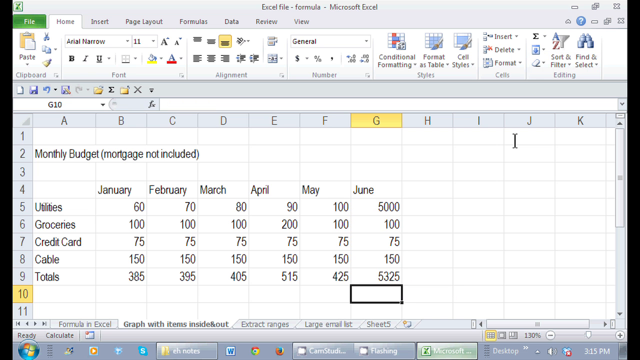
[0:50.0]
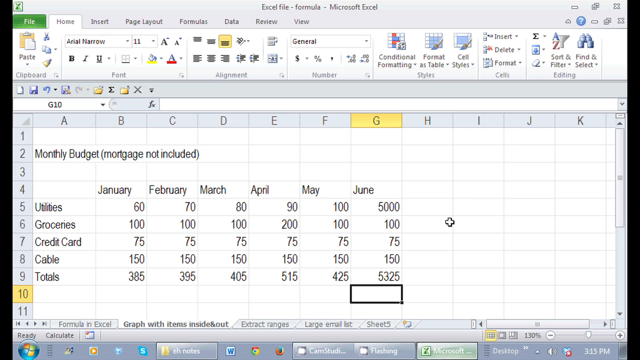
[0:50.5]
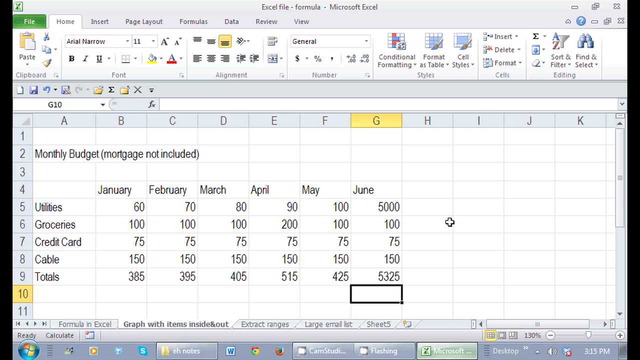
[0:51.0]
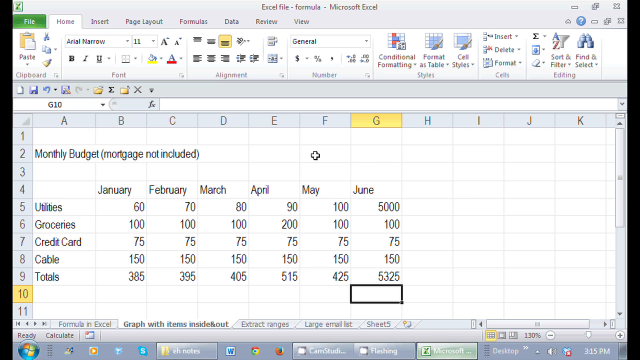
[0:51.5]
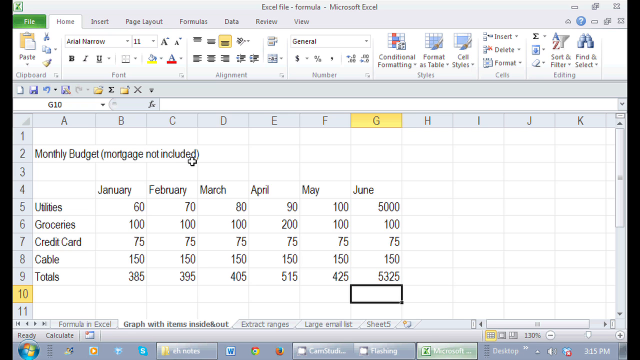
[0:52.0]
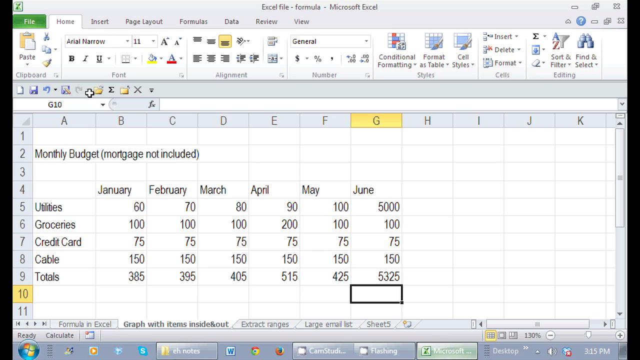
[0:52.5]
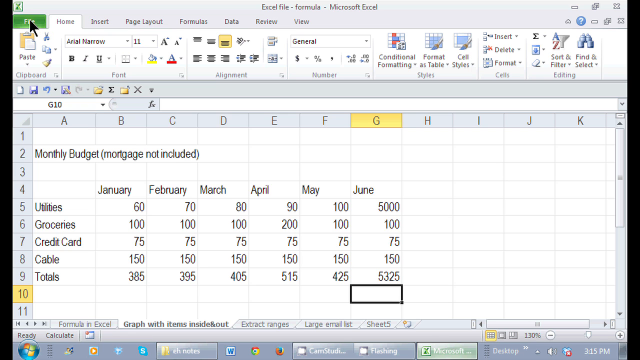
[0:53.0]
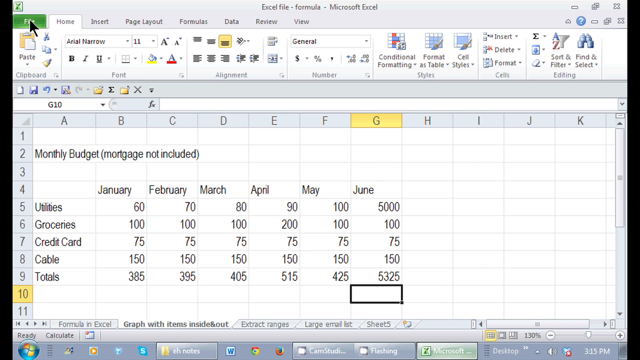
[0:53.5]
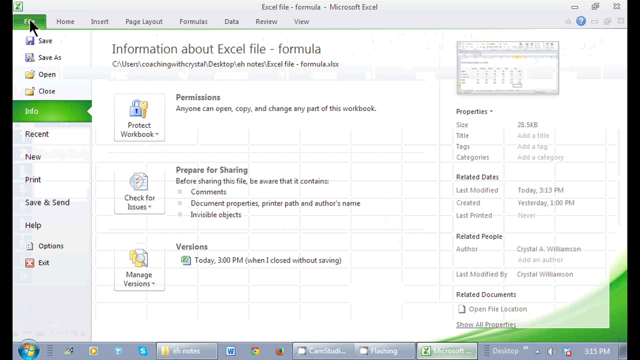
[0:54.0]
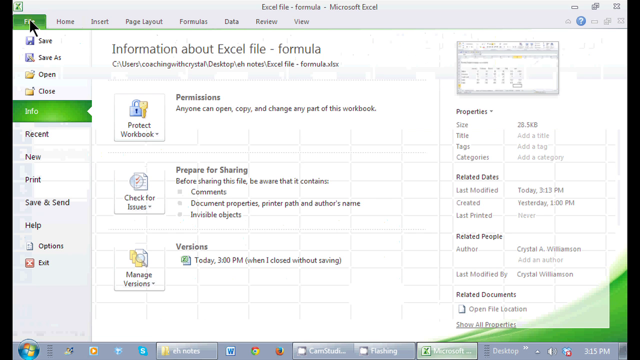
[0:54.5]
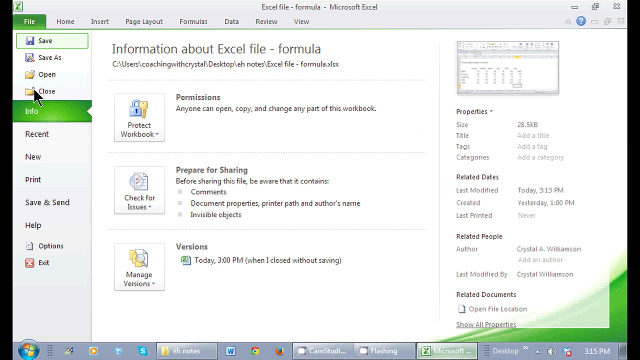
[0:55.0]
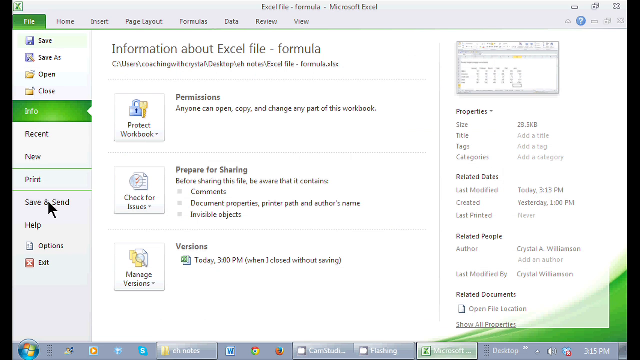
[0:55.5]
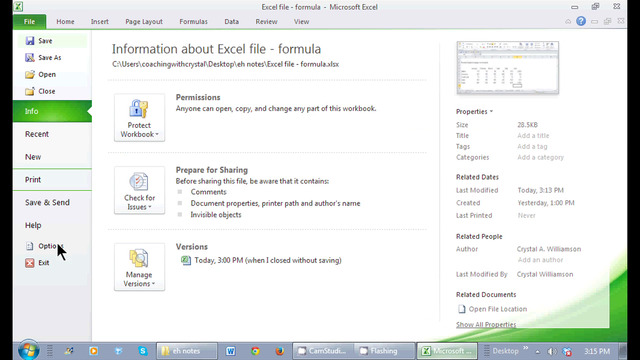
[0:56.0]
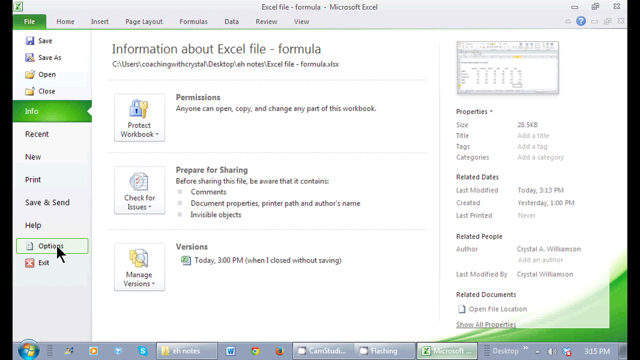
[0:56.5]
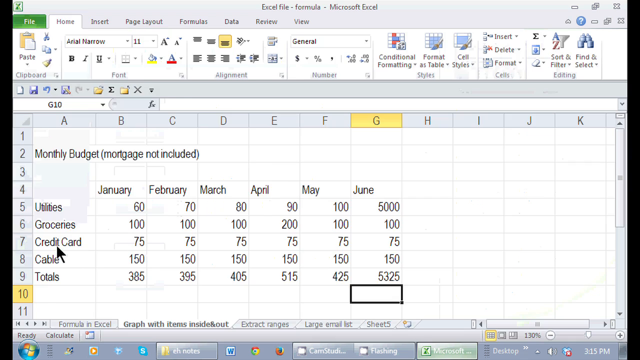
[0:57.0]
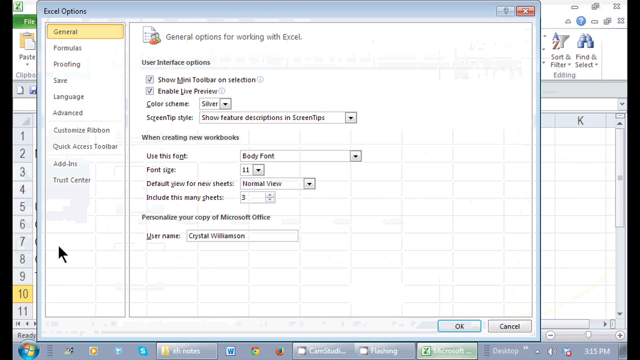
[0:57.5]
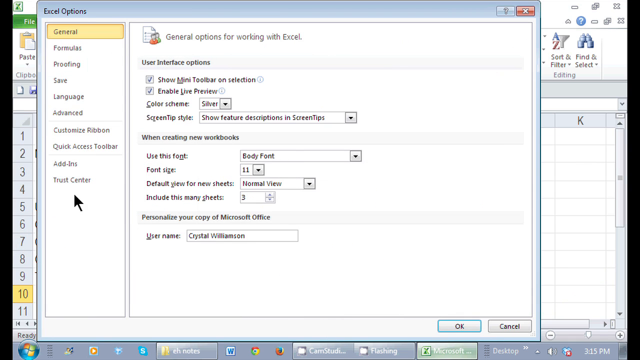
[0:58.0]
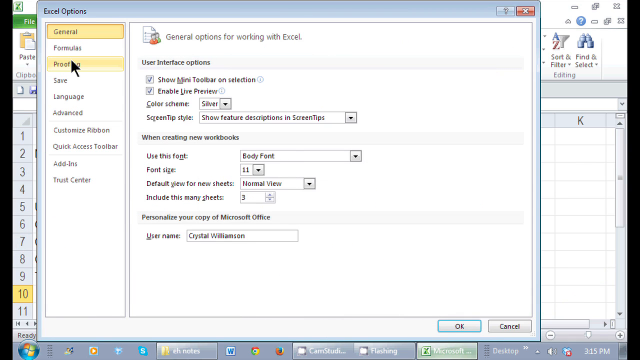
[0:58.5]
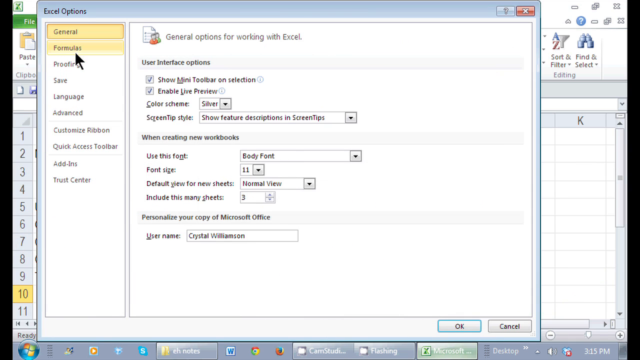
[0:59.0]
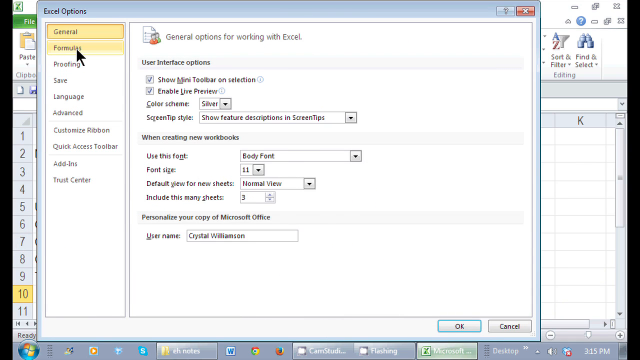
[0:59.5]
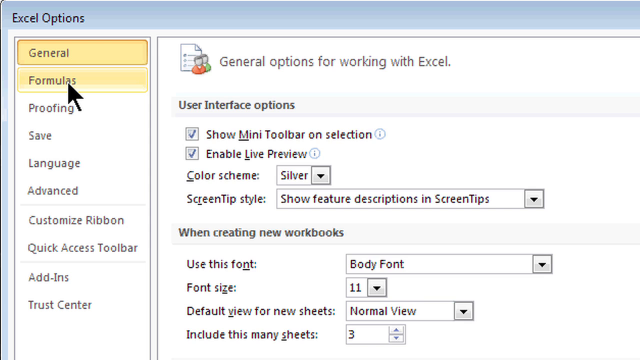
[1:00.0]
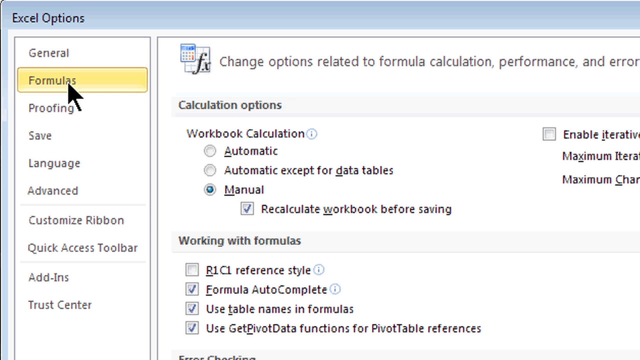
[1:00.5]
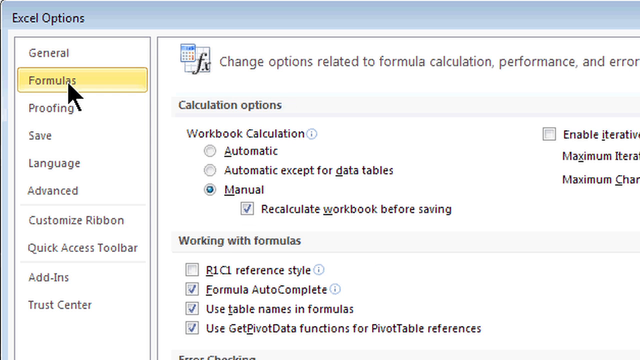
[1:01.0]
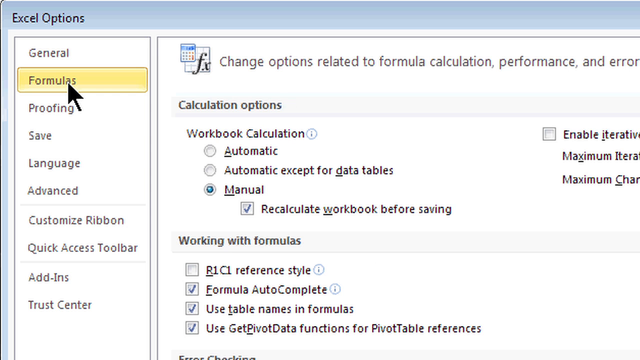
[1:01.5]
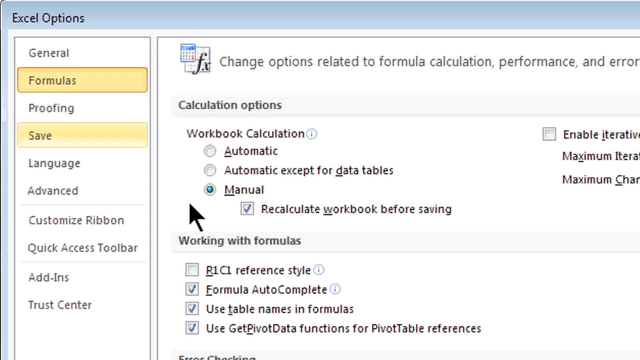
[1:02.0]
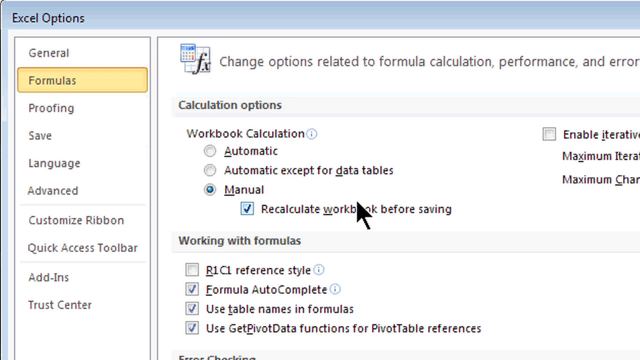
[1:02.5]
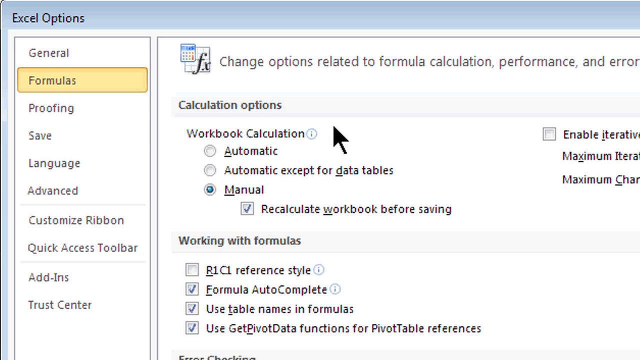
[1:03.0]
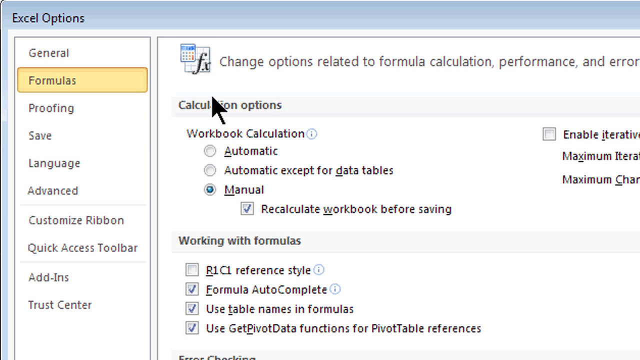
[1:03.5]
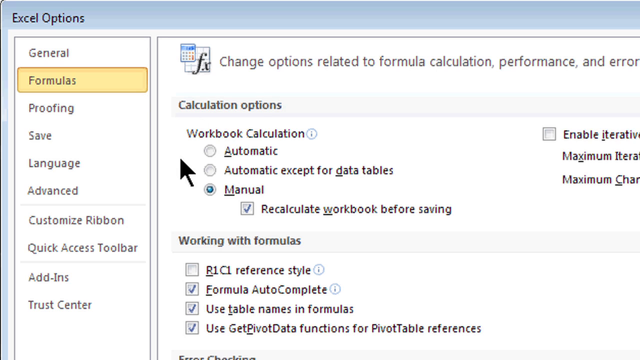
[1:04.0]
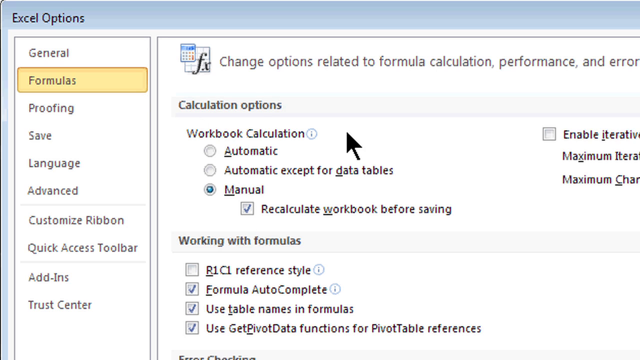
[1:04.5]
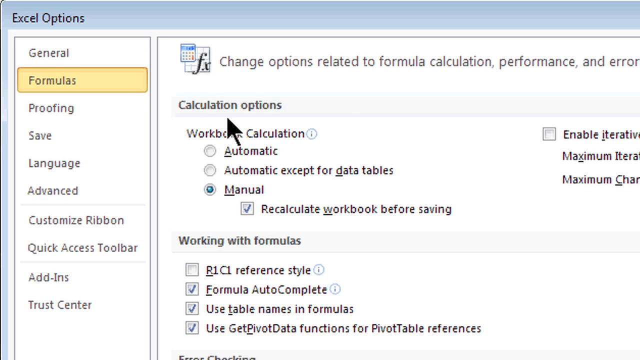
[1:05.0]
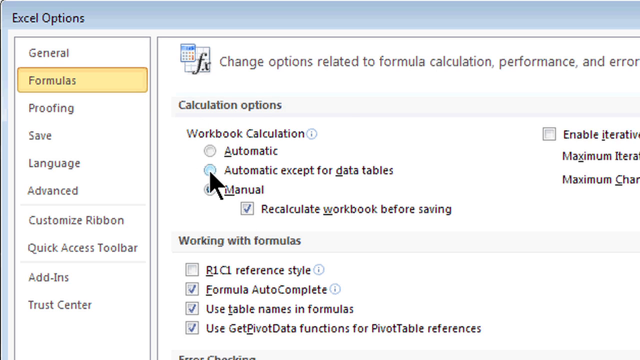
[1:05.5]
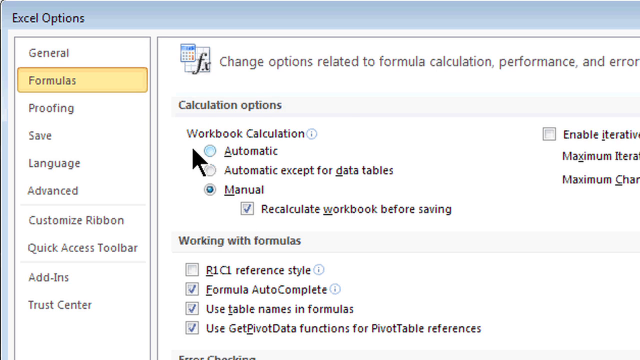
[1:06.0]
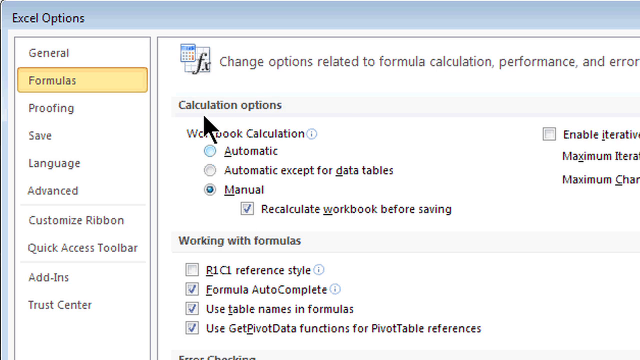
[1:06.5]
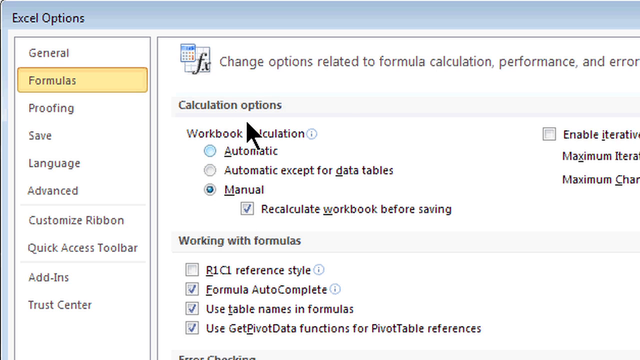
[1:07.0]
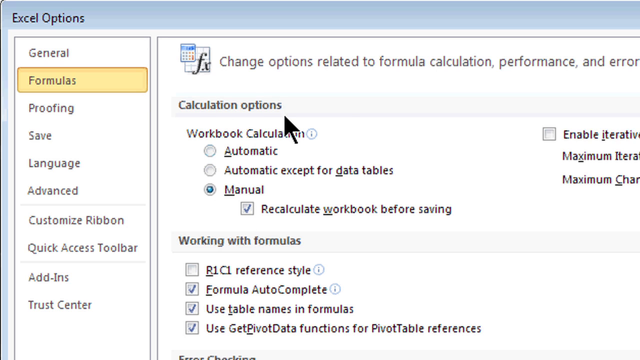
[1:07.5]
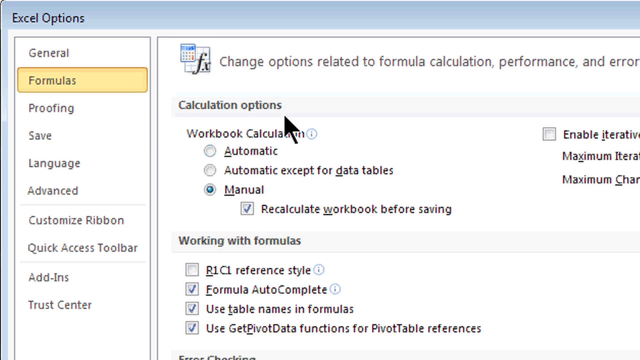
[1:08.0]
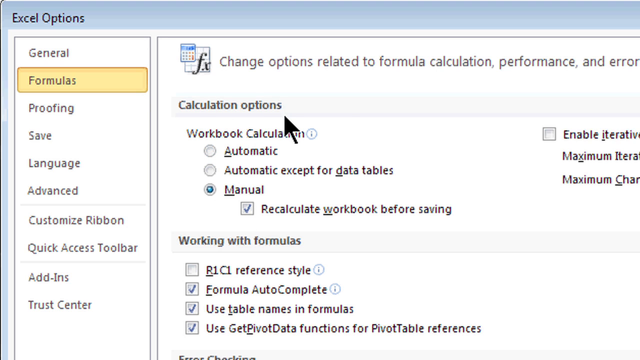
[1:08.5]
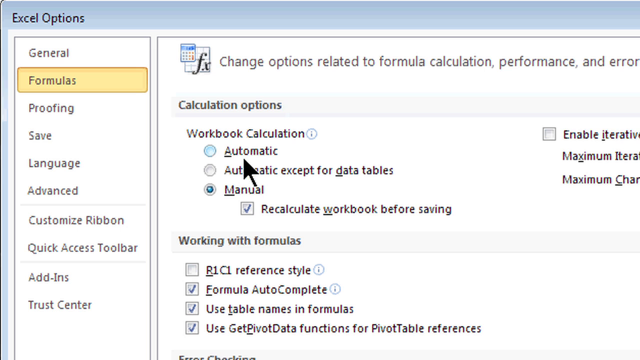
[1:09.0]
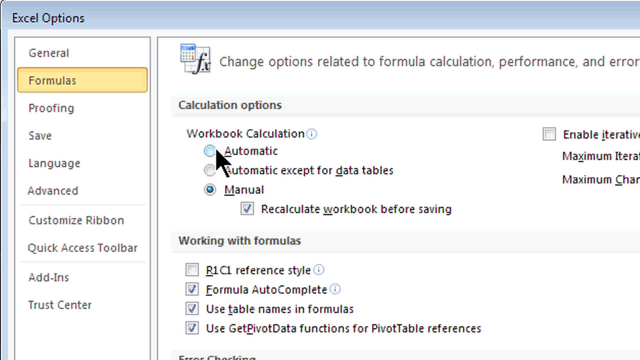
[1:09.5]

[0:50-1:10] The changes she made to the Excel columns are visible. She clicks the File button, which shows a list of information about the file along with typical properties, settings, and save and print options. She goes to Options at the very bottom left, and an Excel Options window pops up listing settings such as Generals, Formulas, Proofing, Save, Language, Advanced, Customize Ribbon, Quick Access Toolbar, Add-ins and the Trust Center. She moves to the Formulas section, which shows more settings specific to formulas, then navigates to the Calculate Options and Workbook Calculation, where she clicks Automatic.